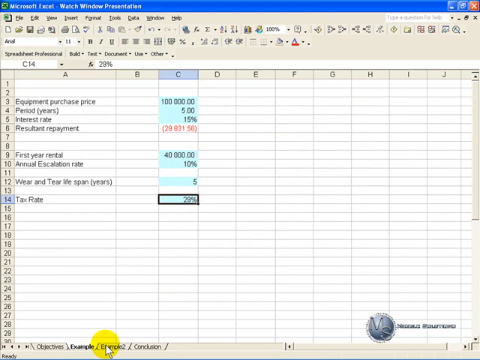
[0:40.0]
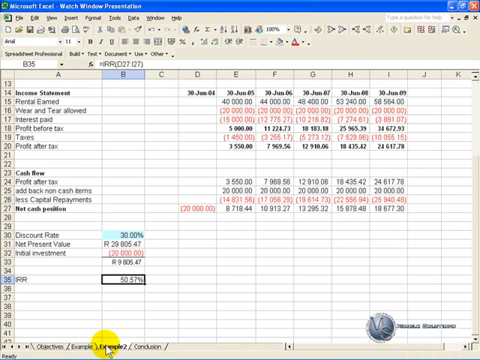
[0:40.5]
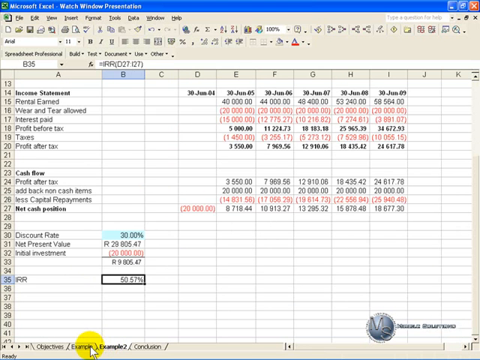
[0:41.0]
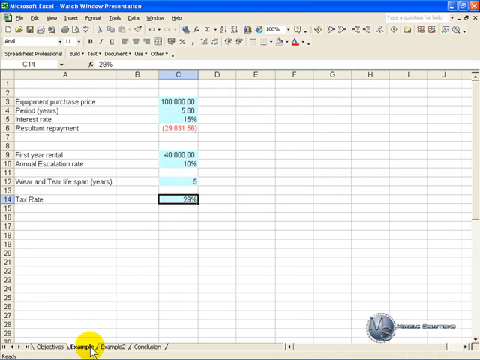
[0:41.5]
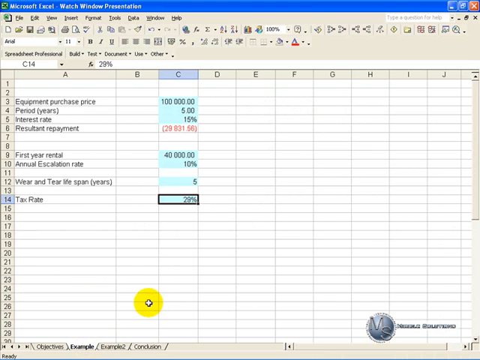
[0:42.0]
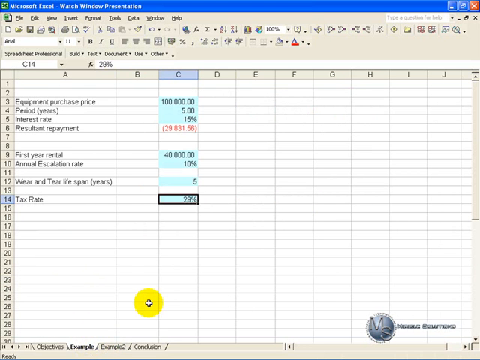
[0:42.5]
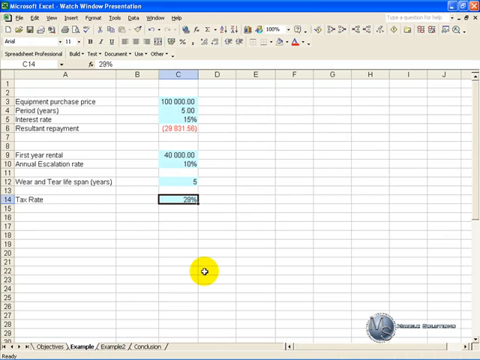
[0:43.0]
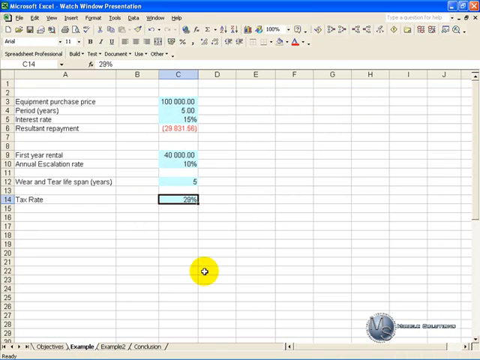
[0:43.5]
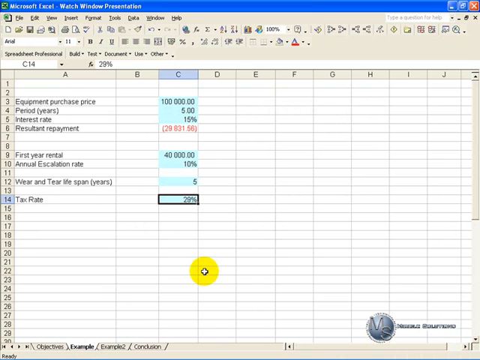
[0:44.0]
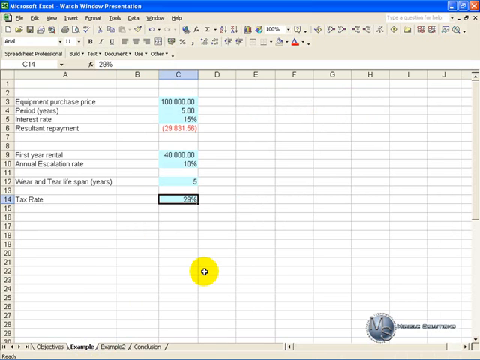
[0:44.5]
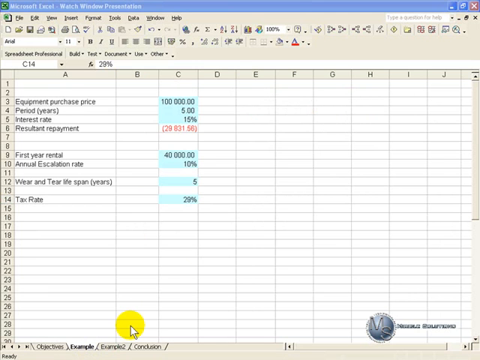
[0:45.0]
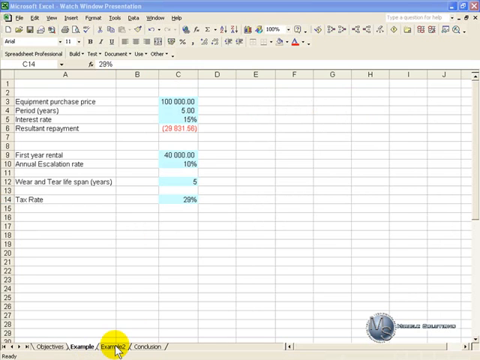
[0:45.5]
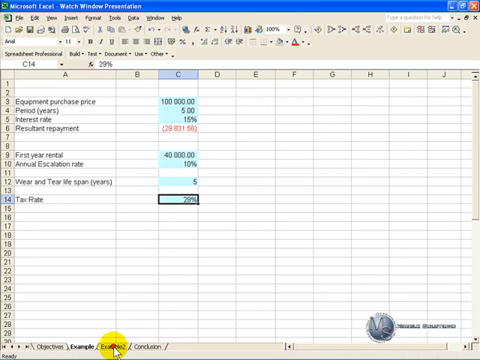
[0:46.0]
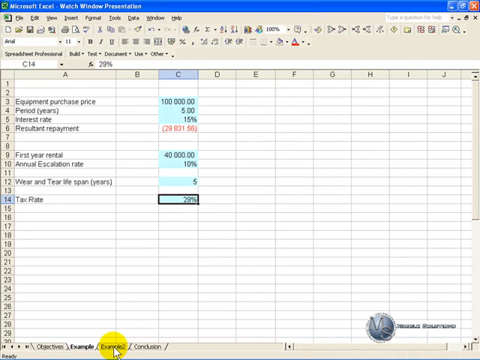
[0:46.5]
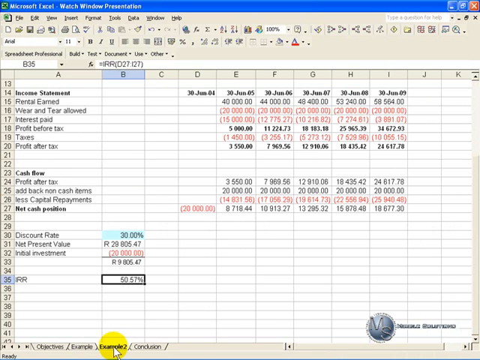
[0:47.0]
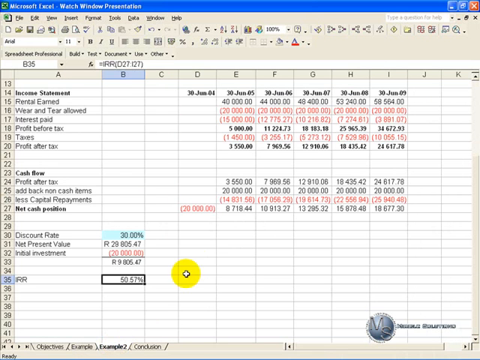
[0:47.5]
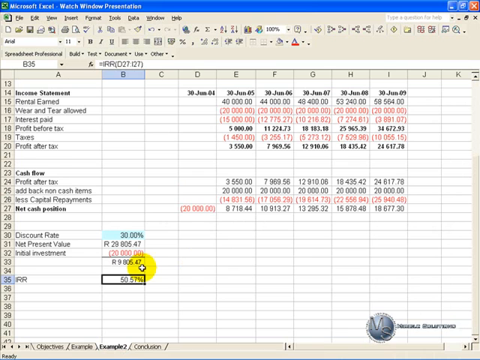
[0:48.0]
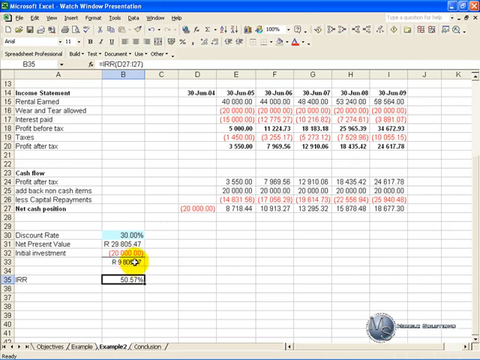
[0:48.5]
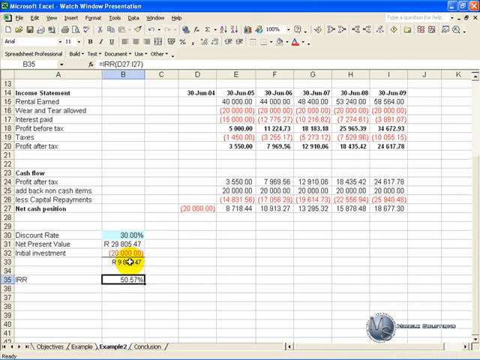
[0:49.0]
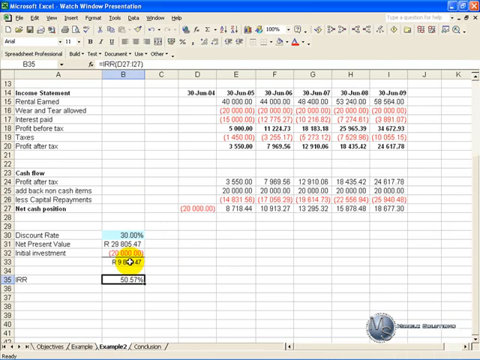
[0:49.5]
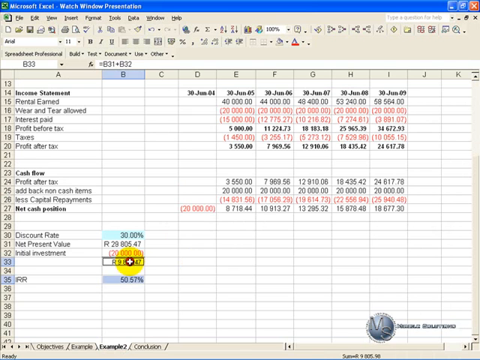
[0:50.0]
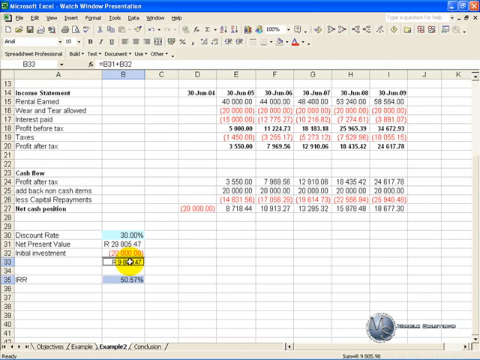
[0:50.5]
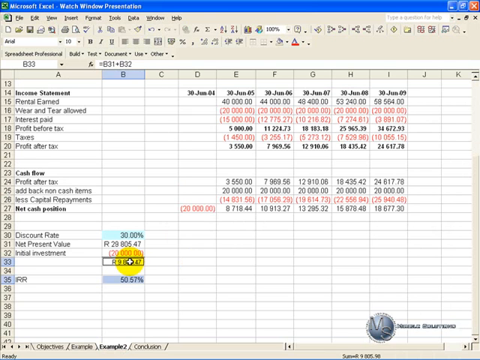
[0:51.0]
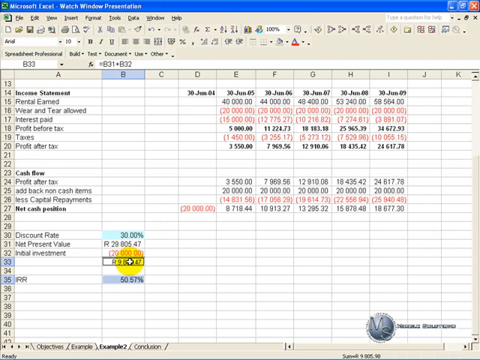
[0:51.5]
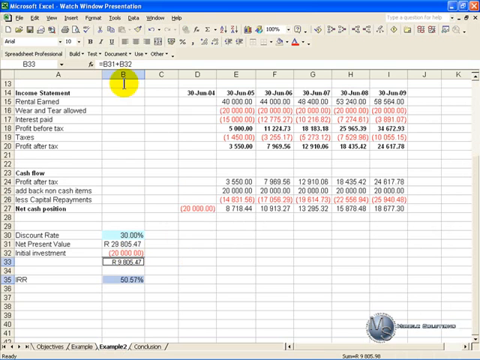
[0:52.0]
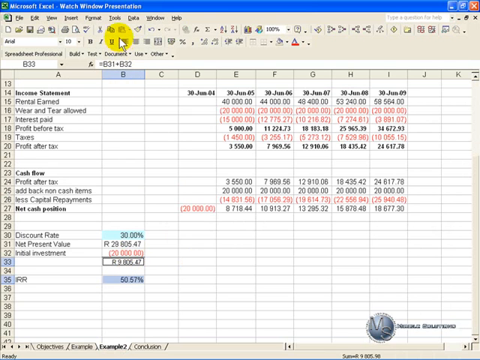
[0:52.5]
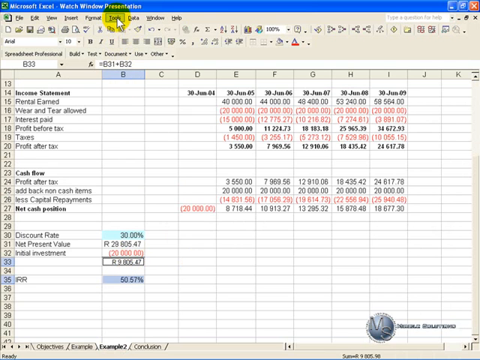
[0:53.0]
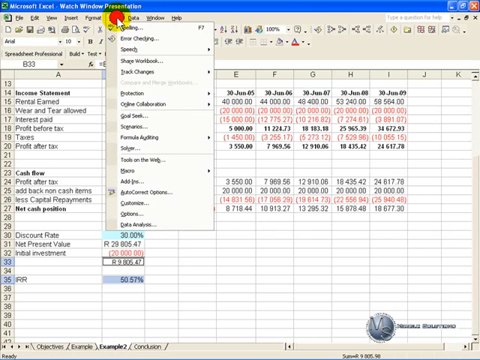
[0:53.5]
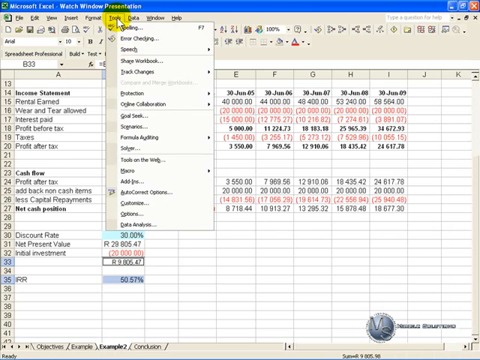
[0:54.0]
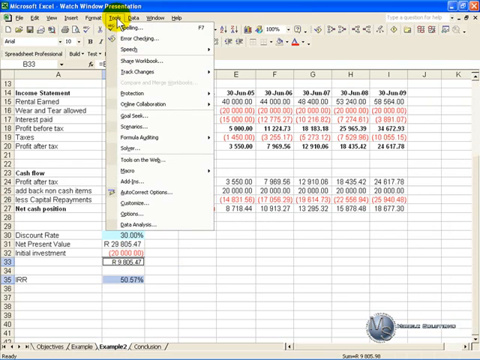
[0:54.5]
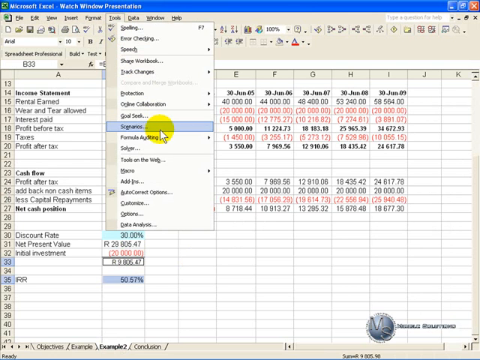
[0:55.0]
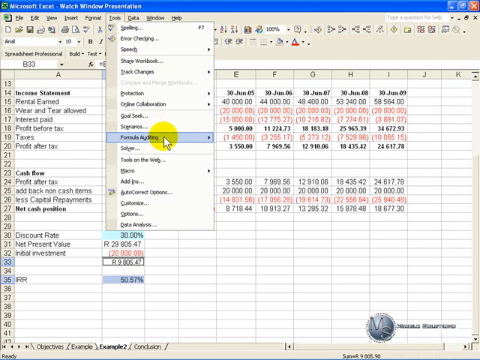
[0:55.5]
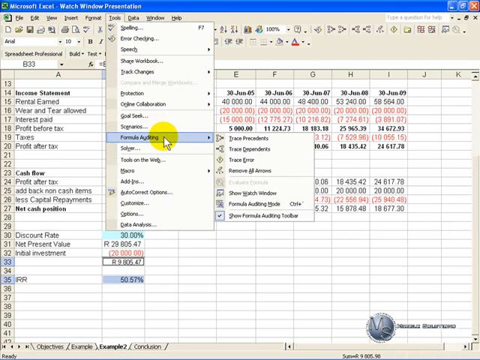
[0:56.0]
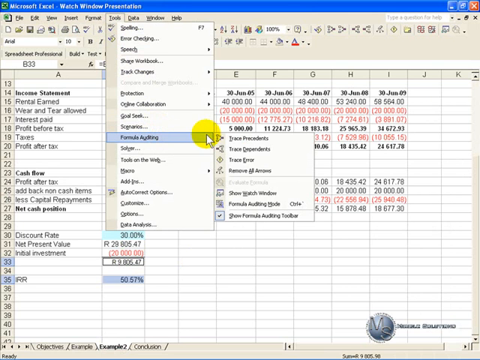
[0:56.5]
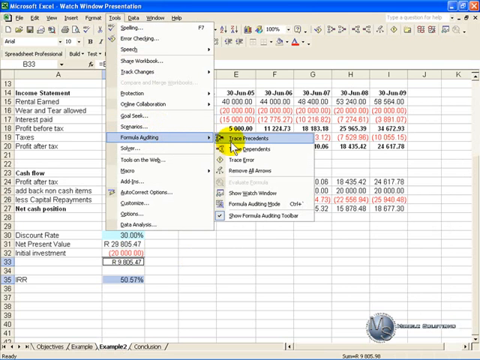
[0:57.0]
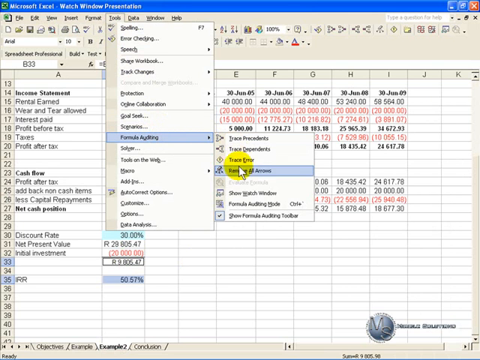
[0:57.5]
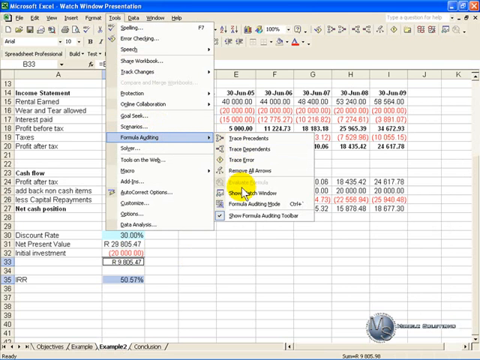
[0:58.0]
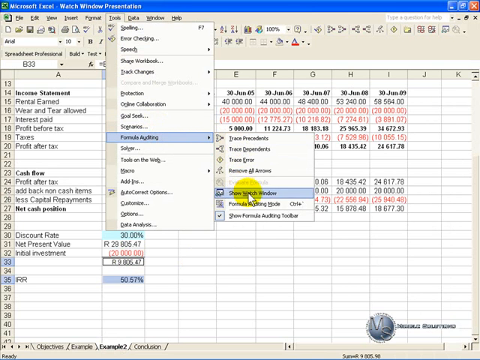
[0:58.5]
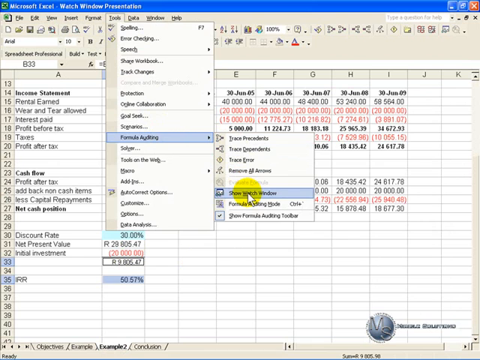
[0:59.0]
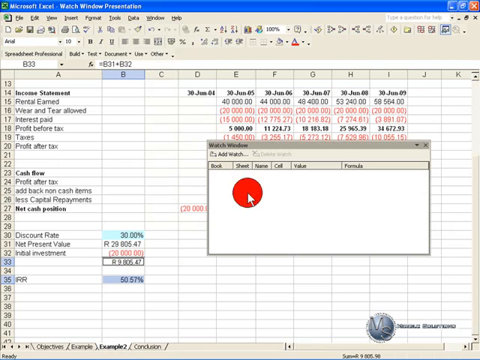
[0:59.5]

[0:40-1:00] The mouse with the yellow circle clicks on an "example" tab at the bottom of the screen, which opens to the blue highlighted numbers in column C. It then clicks "example 2" at the bottom, returning to the view with text in column A, numbers between columns D and I, and some entries near the bottom of column B. The mouse clicks cell B33, then goes up to the toolbar at the top of the screen, opens two dropdown menus, hovers over the options and clicks "show watch window," which opens a small blank white window over the Microsoft Excel spreadsheet.